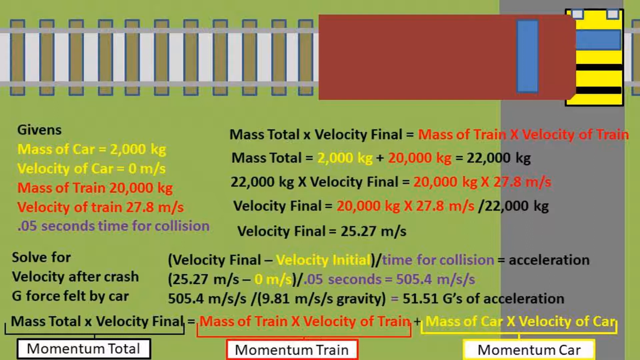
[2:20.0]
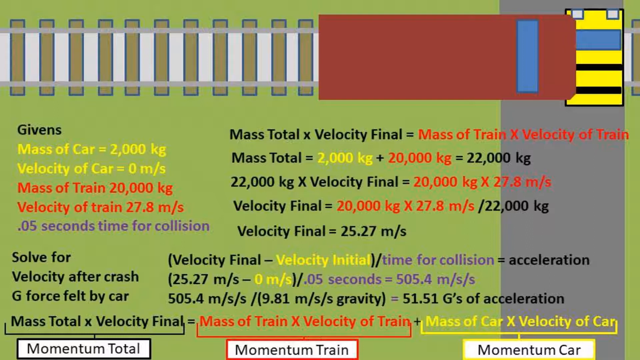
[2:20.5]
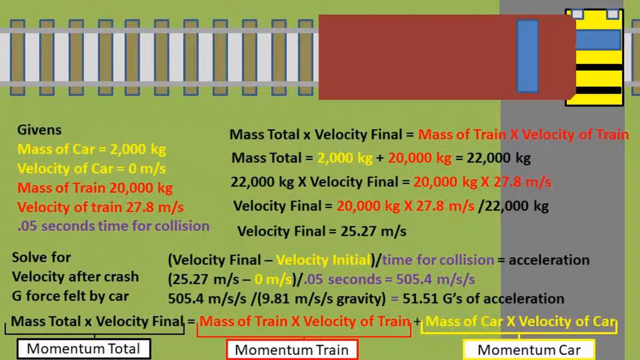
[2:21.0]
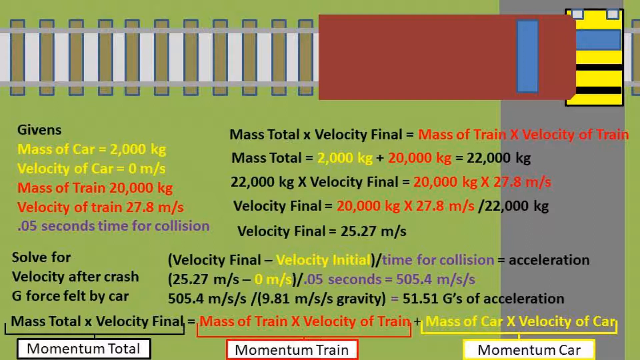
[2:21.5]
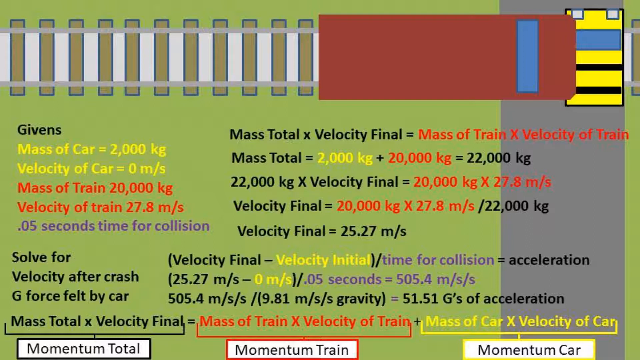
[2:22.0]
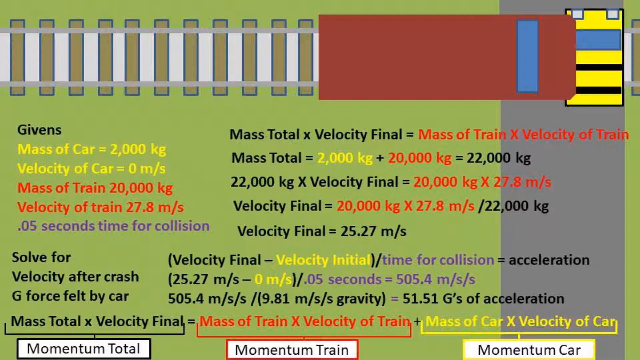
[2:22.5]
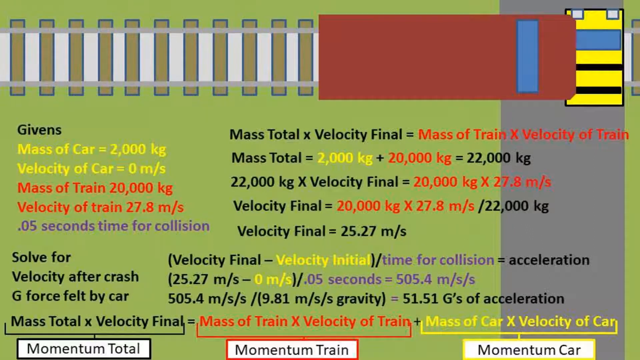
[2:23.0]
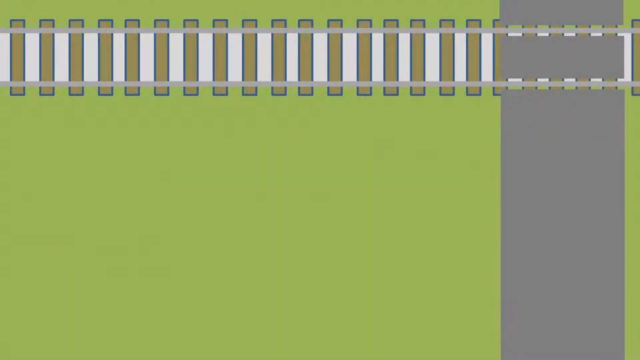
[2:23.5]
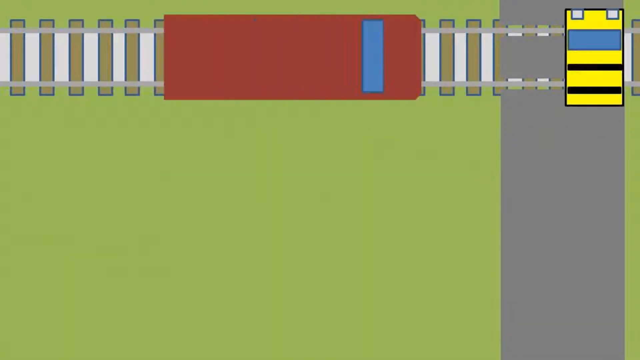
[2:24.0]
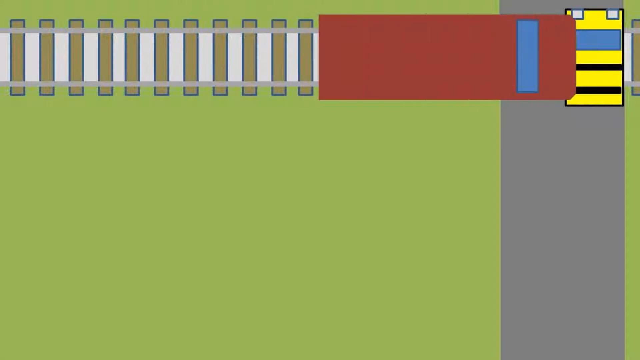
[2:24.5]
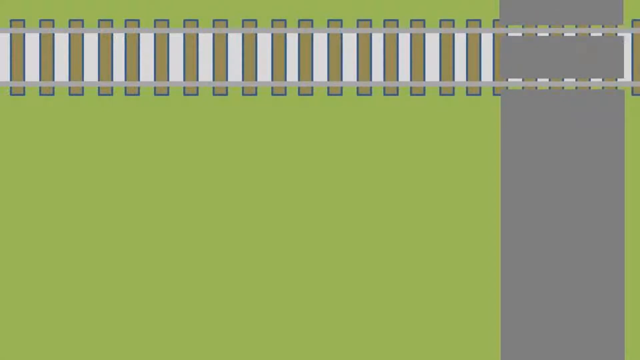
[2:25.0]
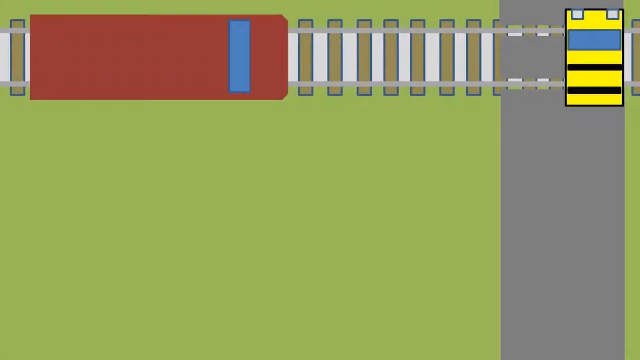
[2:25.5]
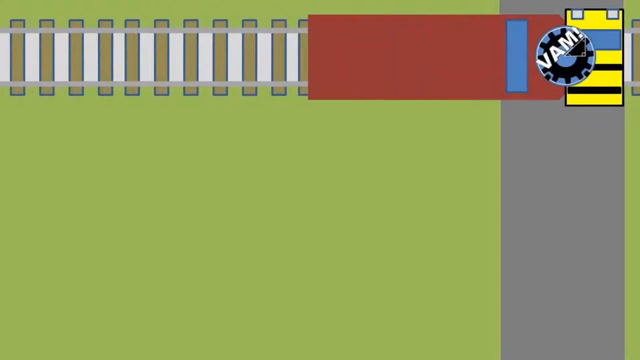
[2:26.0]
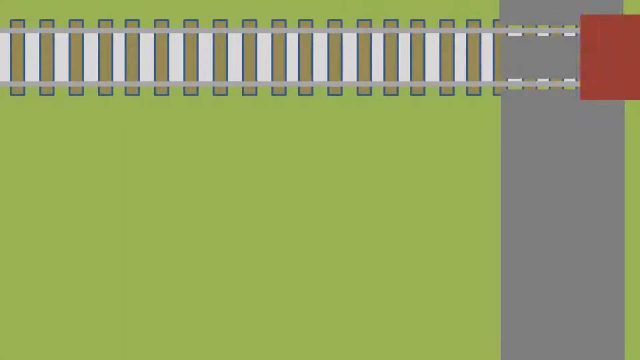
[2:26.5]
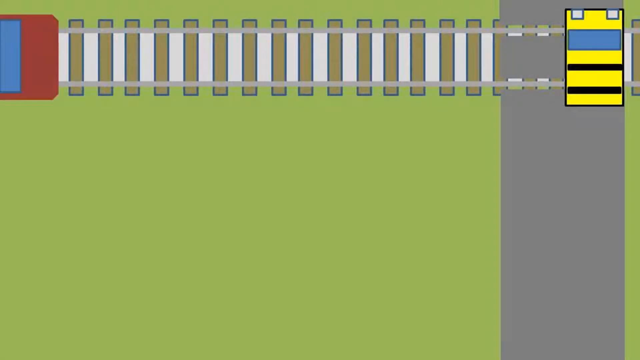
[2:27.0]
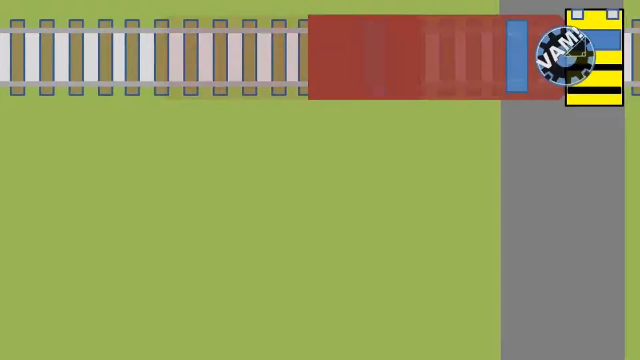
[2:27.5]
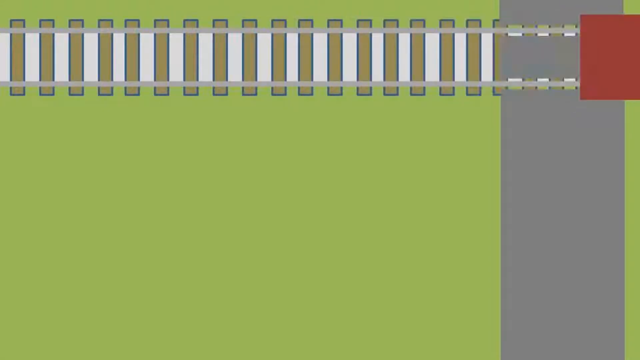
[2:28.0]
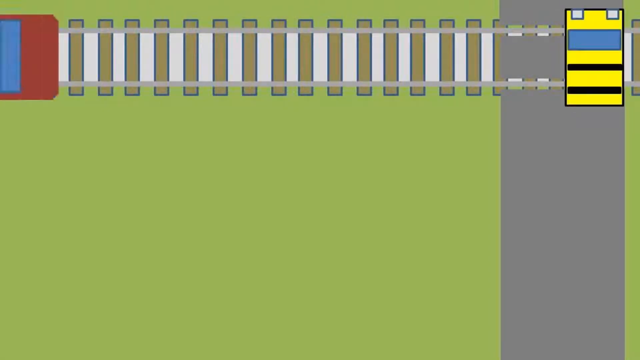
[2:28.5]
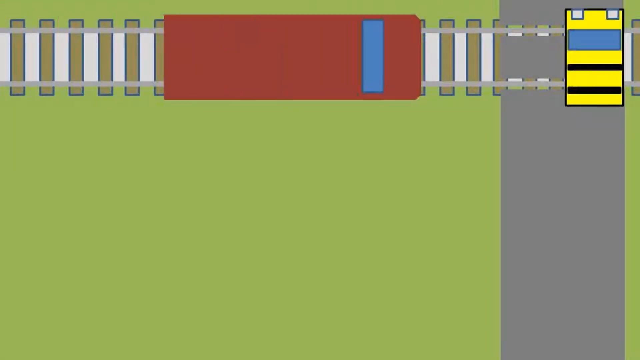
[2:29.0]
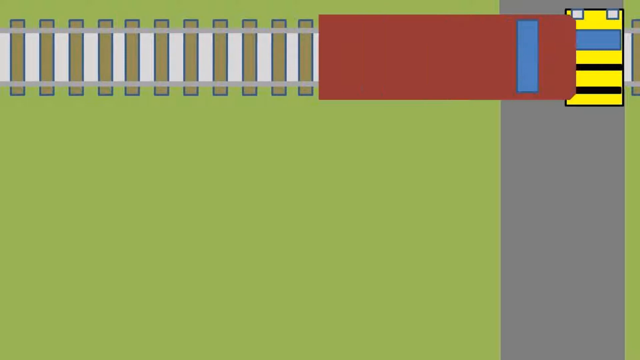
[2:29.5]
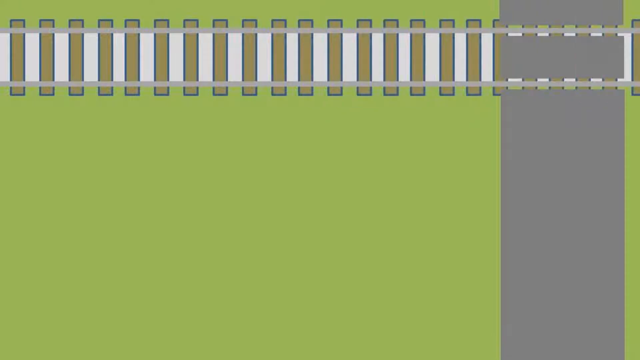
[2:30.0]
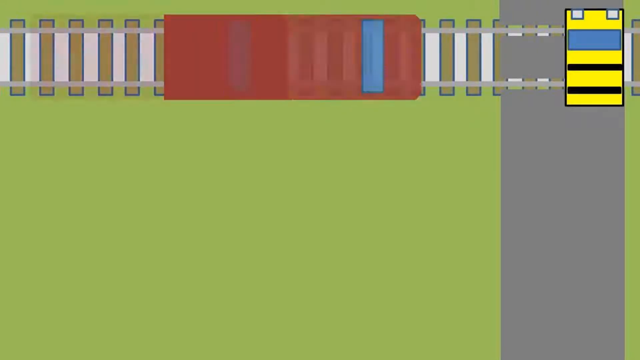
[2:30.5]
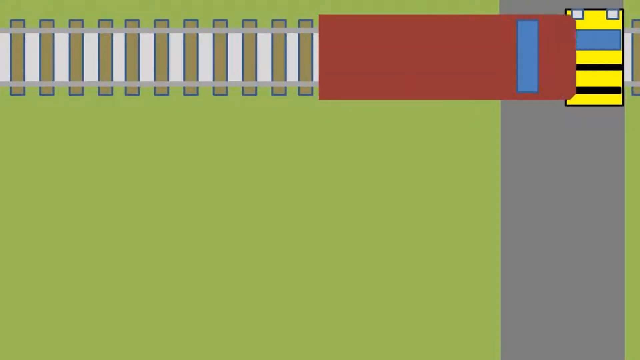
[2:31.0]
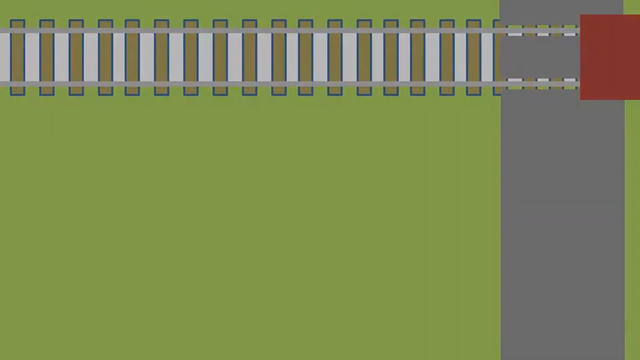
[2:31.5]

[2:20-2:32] A simplified diagram shows a car stopped on train tracks and a train that has hit it. It appears to be a math problem, with givens for both the train and the car and a full mathematical breakdown calculating the velocity after the crash and the g-force felt by the car. The math then disappears, leaving the car on screen with the train coming towards it and hitting it numerous times, and a small logo pops up saying "VAM!" before the video ends.